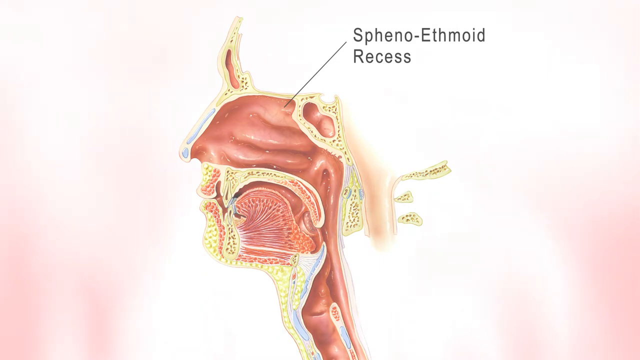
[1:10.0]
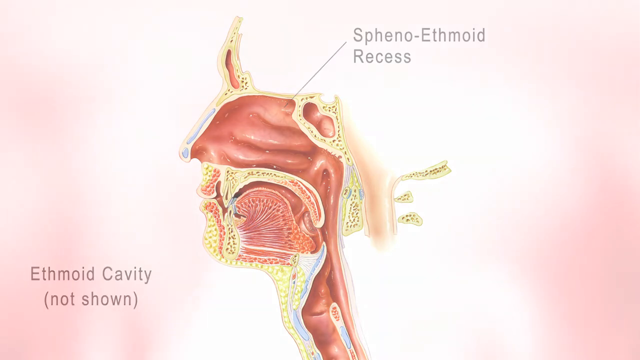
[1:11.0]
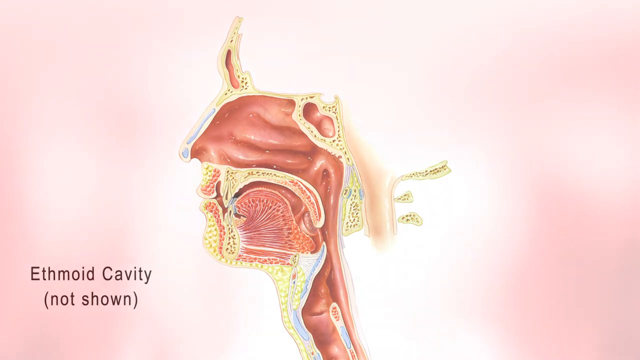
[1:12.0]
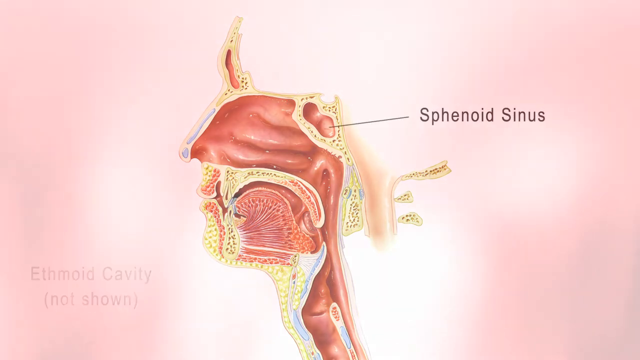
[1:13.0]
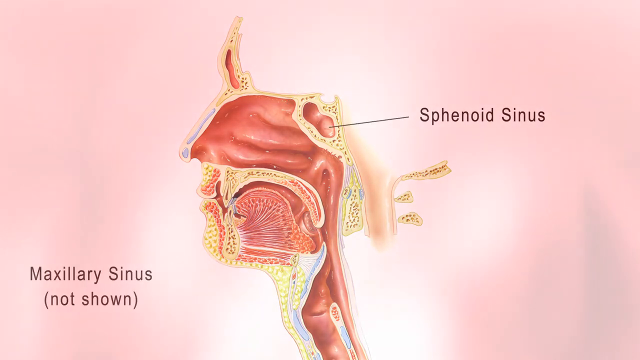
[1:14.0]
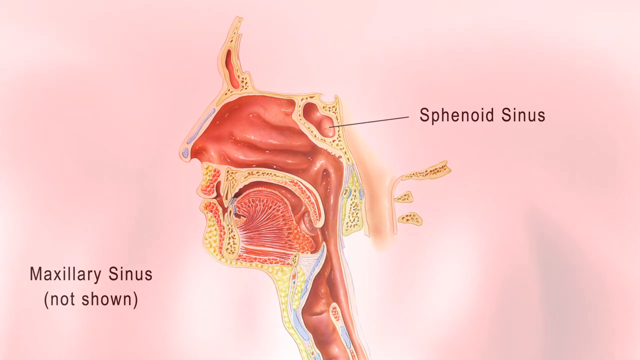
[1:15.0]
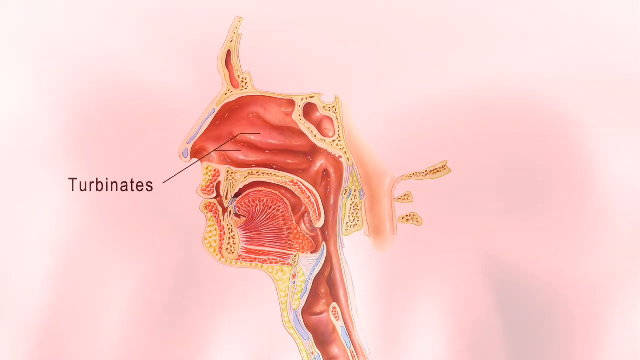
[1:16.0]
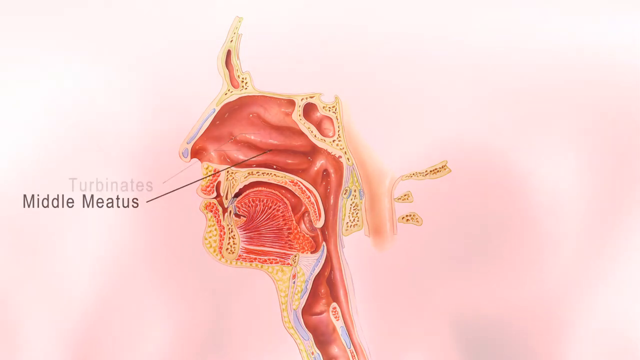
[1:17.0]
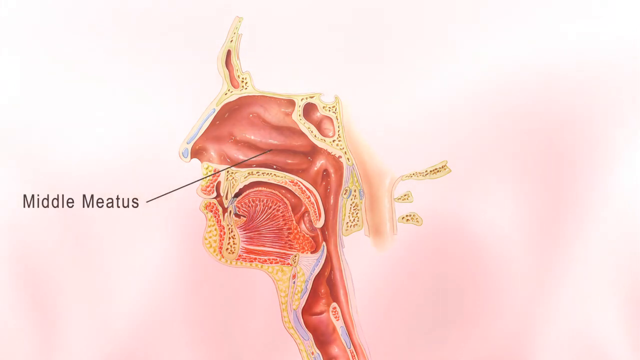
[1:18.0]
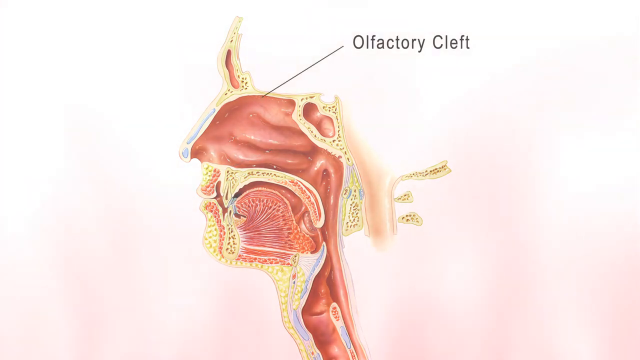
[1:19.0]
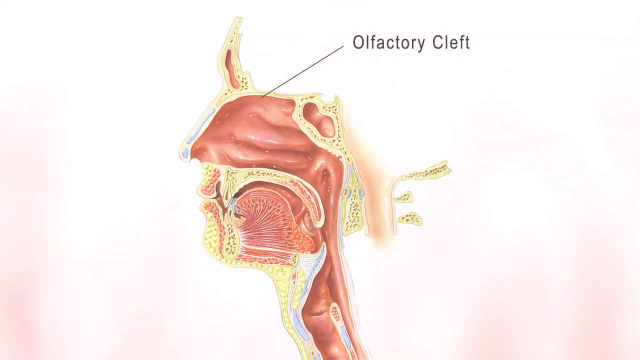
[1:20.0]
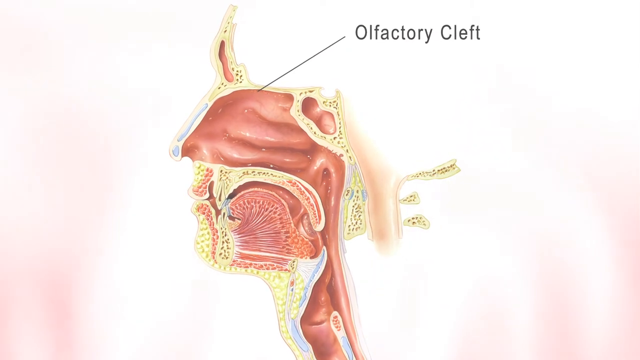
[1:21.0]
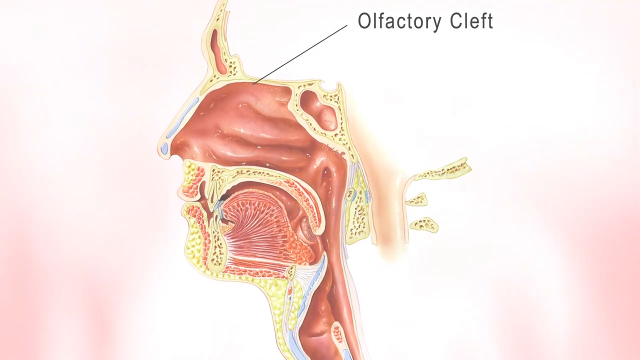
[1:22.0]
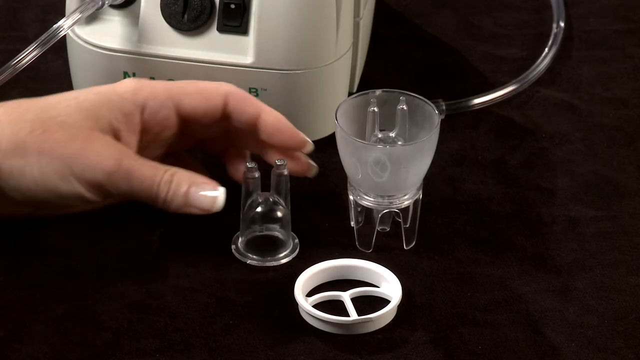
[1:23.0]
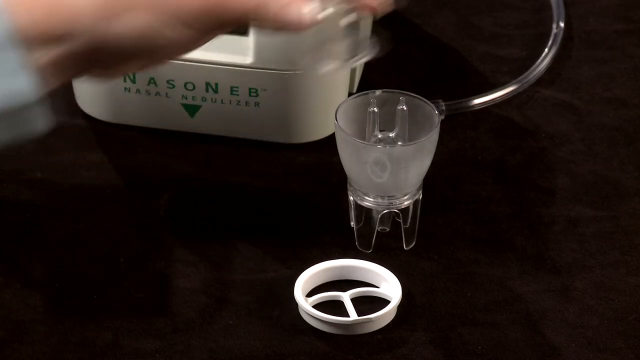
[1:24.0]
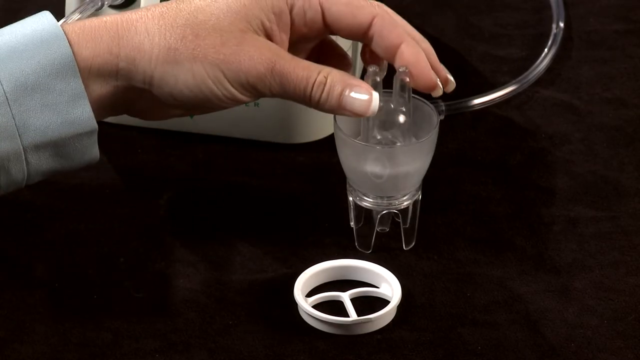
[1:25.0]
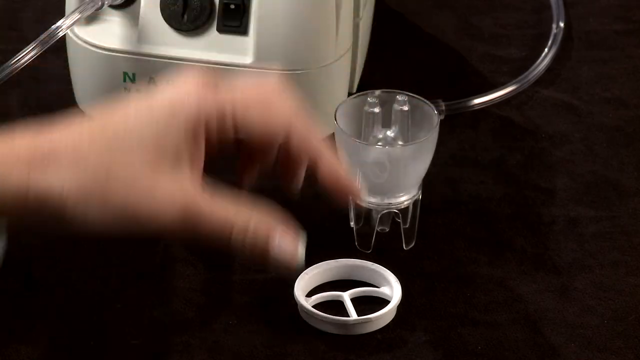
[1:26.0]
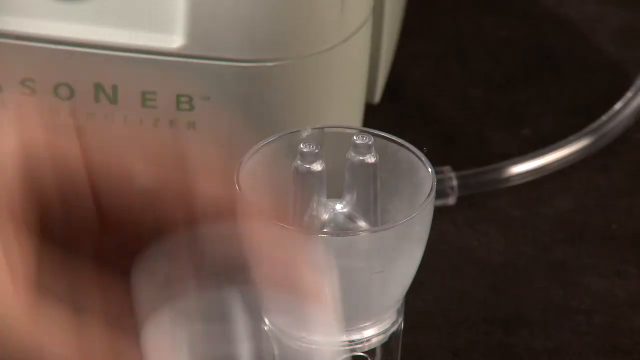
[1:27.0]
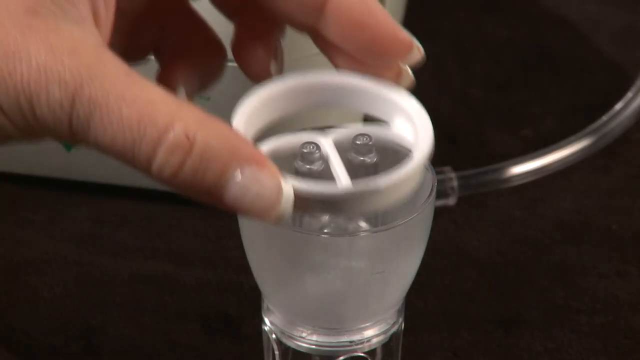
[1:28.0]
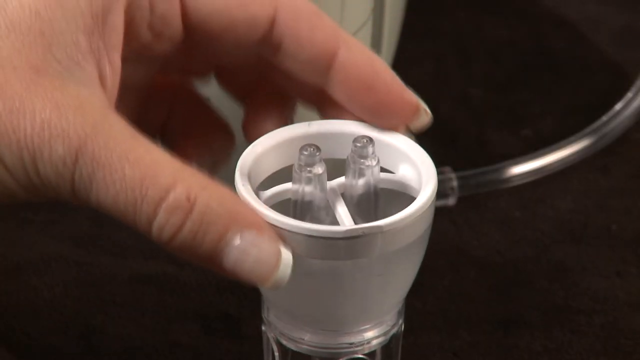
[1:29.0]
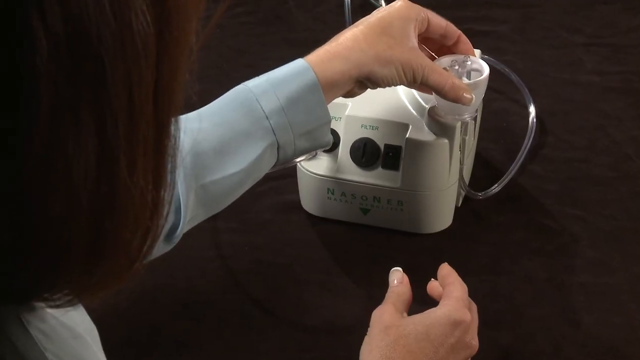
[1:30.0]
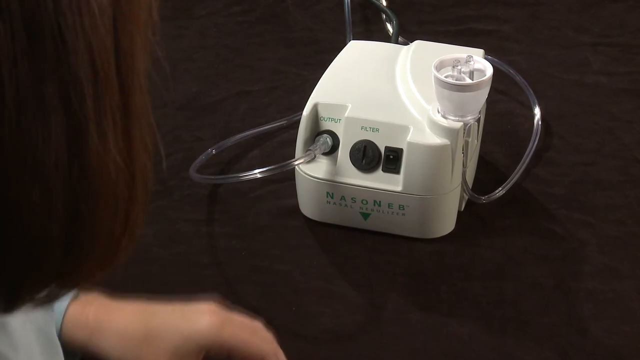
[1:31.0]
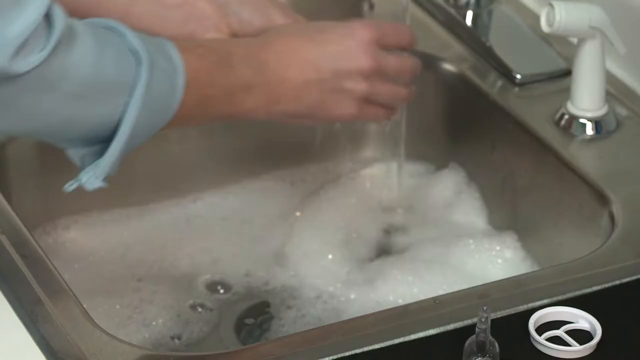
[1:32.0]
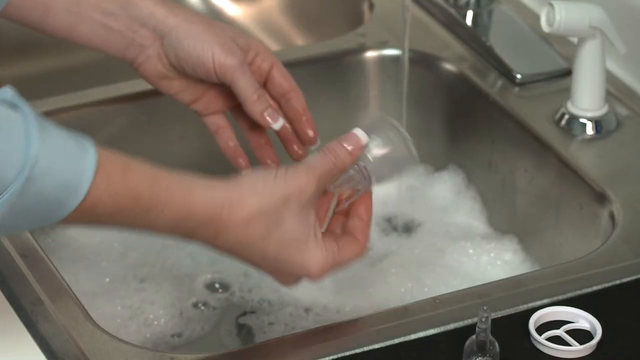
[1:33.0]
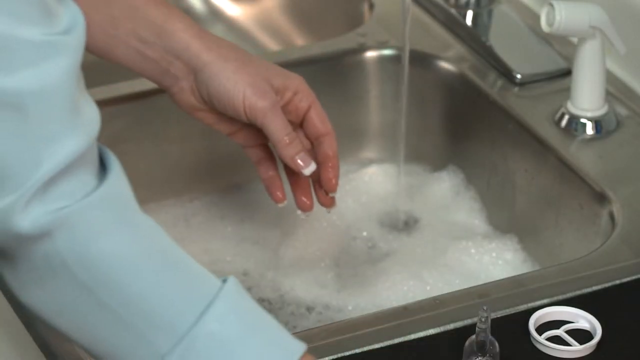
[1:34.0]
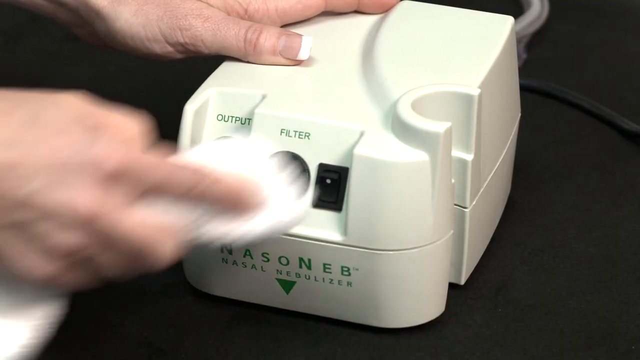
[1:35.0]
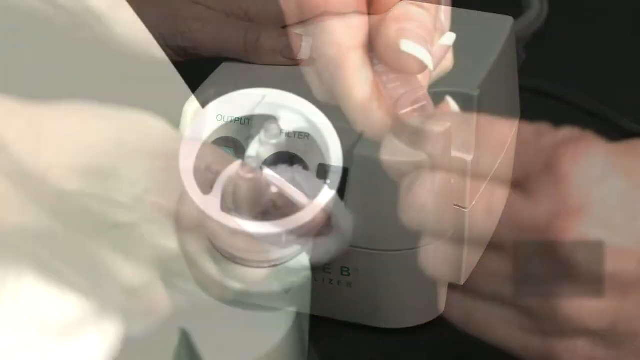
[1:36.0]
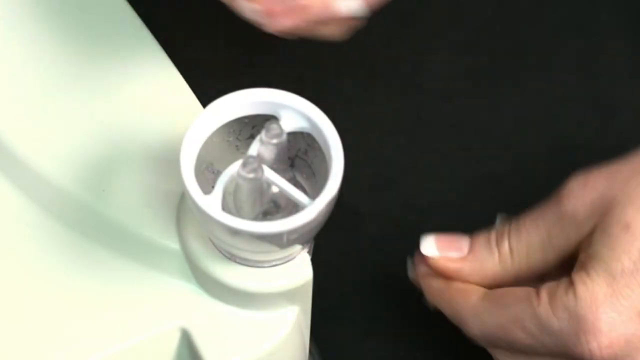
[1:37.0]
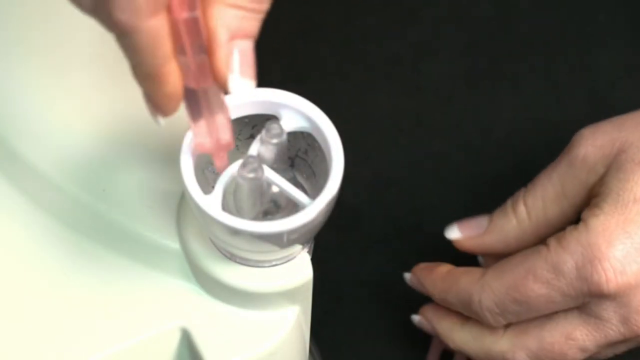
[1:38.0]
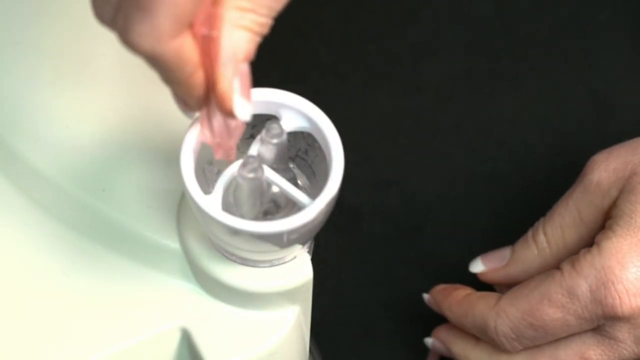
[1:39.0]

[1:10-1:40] The cross-section reads "ethmoid cavity not shown" and shows the sphenoid sinus, the middle meatus and the olfactory cleft. A close view of the nebulizer machine follows; it has a piece that clips onto it for easier use. A person washes the equipment by hand in a silver sink, with bubbles in the sink basin, apparently from soap. The machine is also wiped clean. The button or switch and the knobs are black, while the machine is all white. "NasoNeb nebulizer" is written in green on the front piece of the machine. The machine's design is compact and small. On its right side there is a curve where the pieces clip on for easier storage.